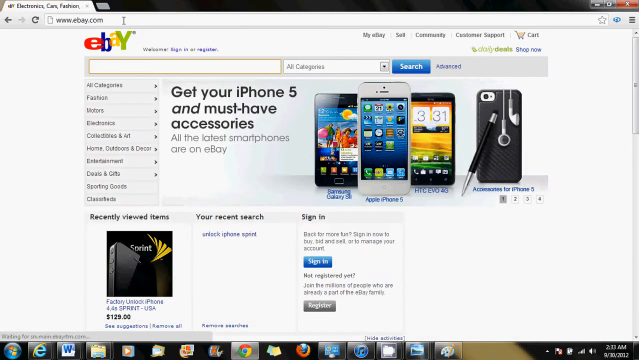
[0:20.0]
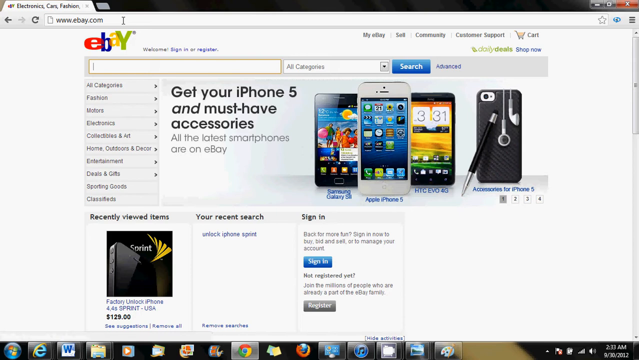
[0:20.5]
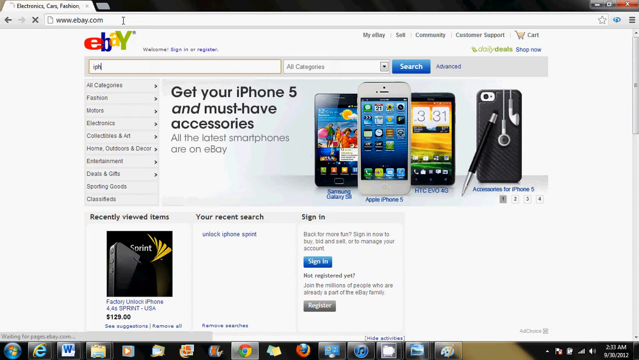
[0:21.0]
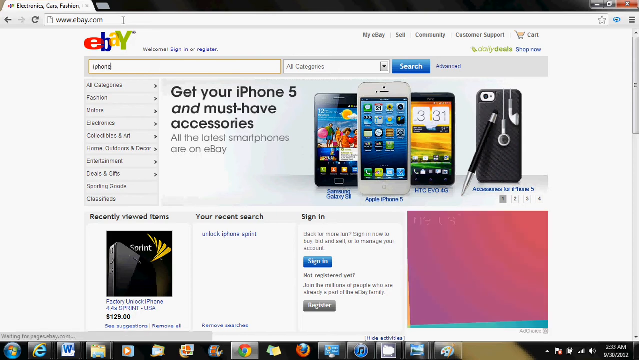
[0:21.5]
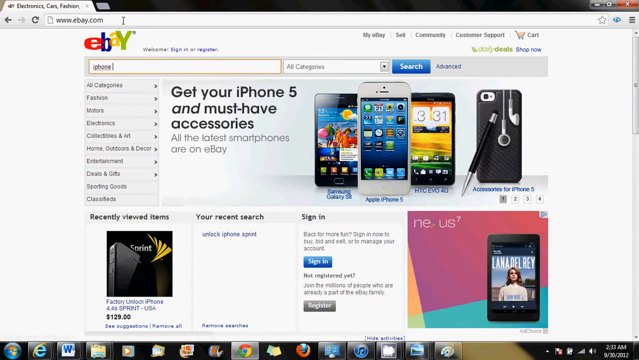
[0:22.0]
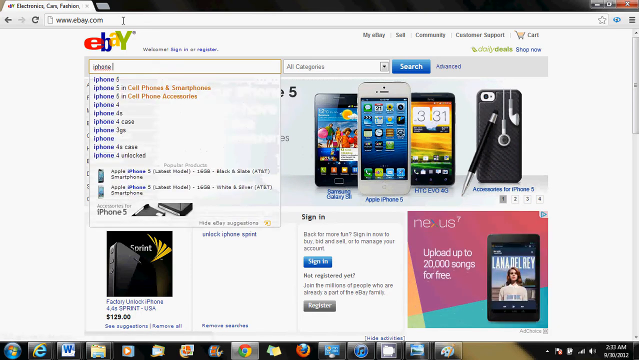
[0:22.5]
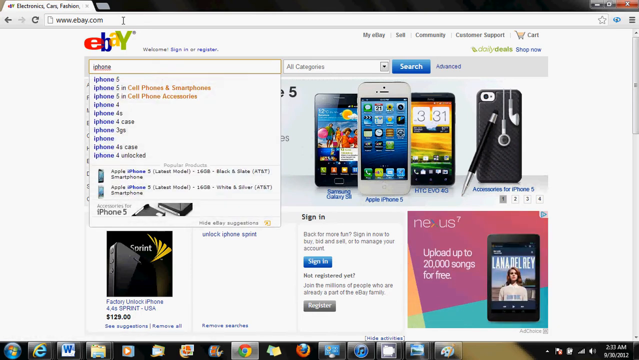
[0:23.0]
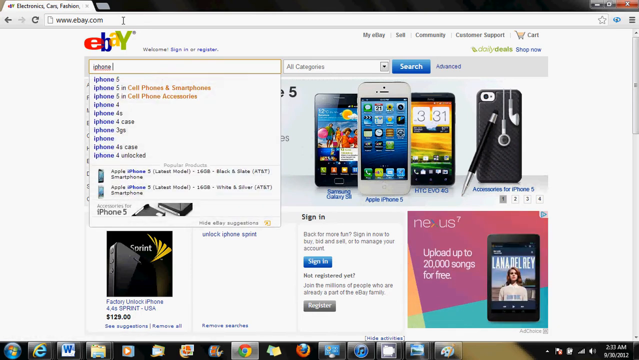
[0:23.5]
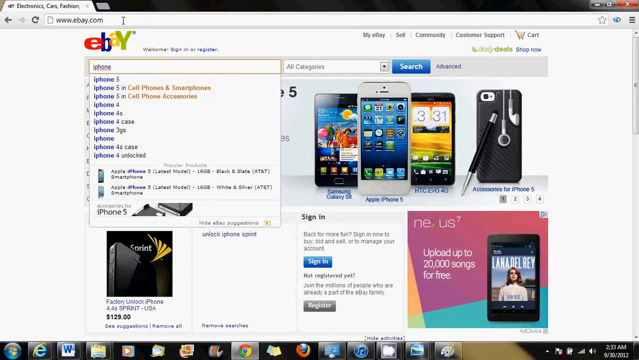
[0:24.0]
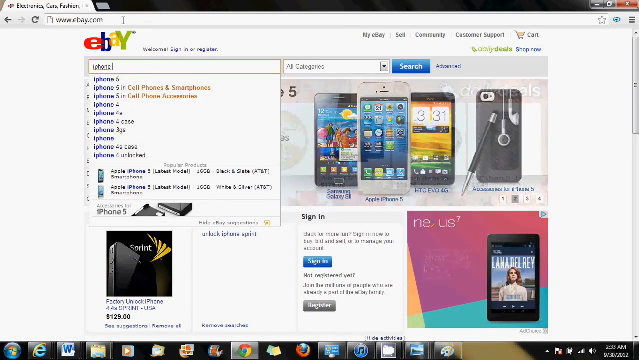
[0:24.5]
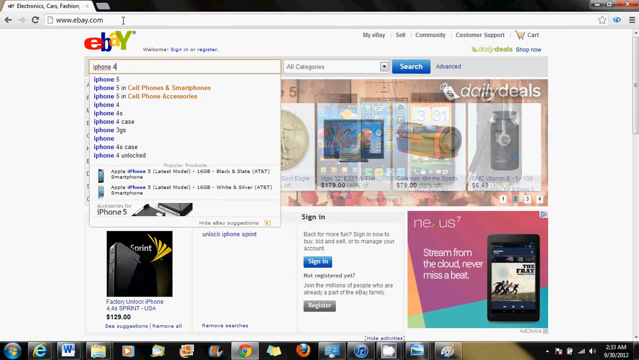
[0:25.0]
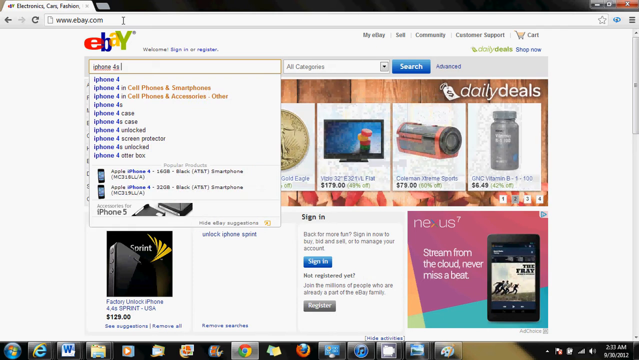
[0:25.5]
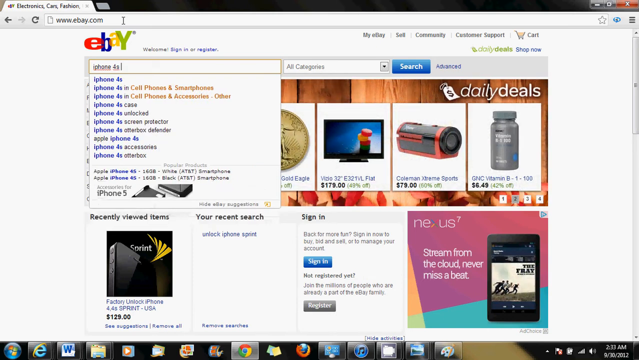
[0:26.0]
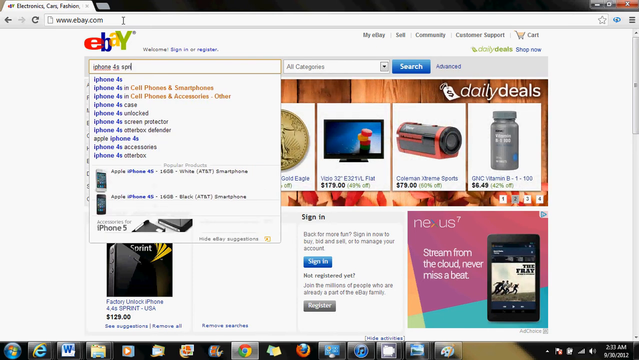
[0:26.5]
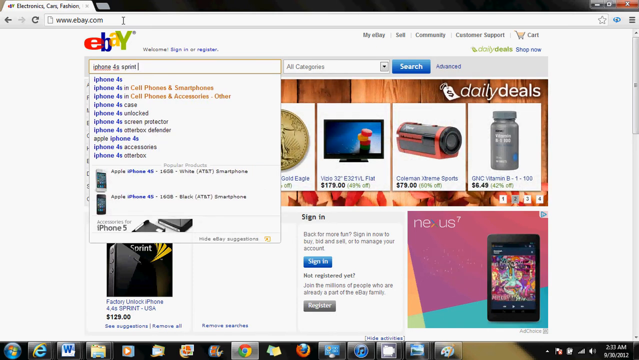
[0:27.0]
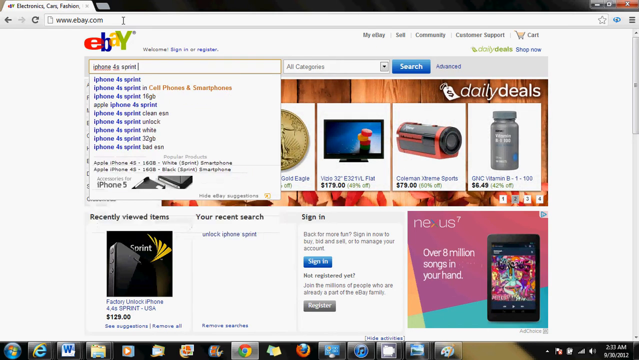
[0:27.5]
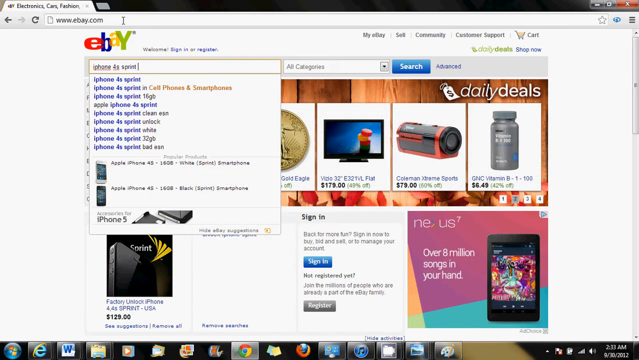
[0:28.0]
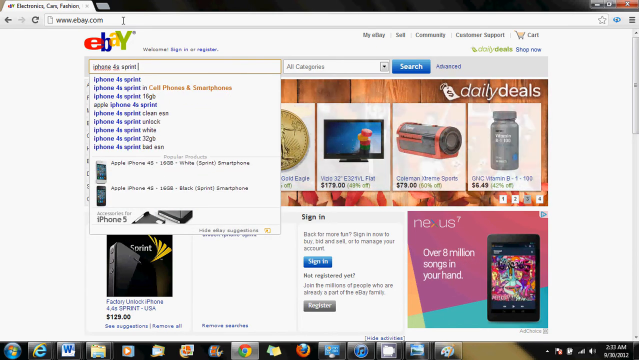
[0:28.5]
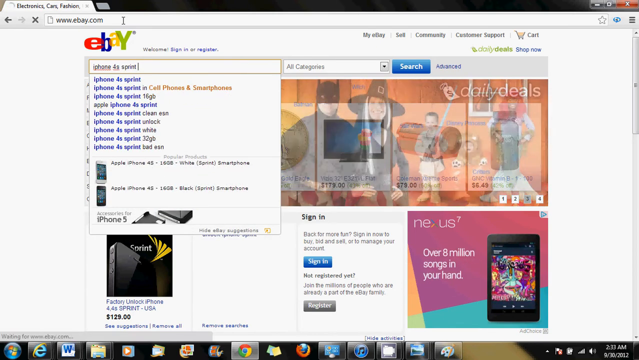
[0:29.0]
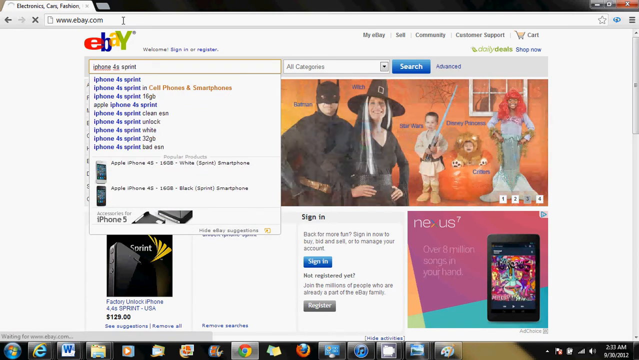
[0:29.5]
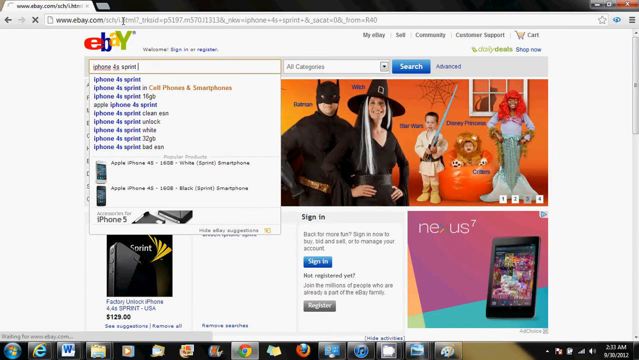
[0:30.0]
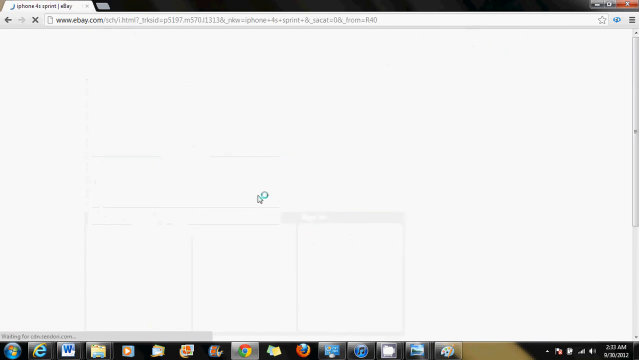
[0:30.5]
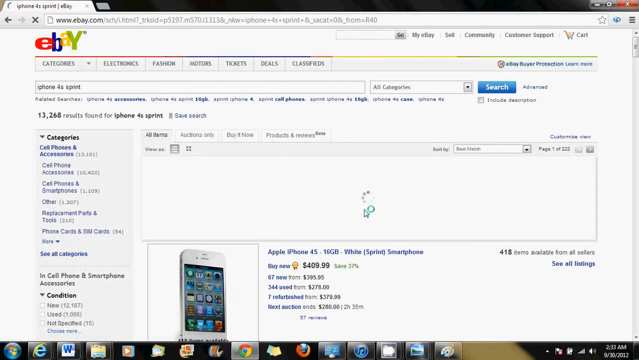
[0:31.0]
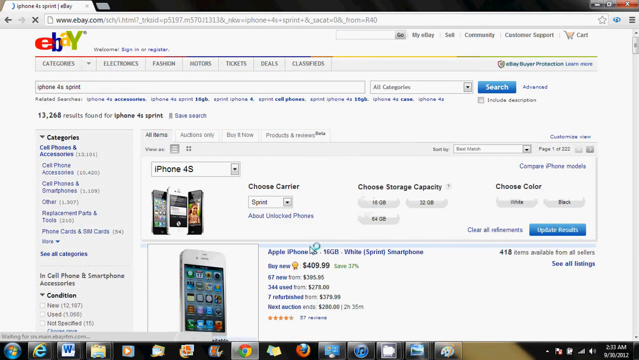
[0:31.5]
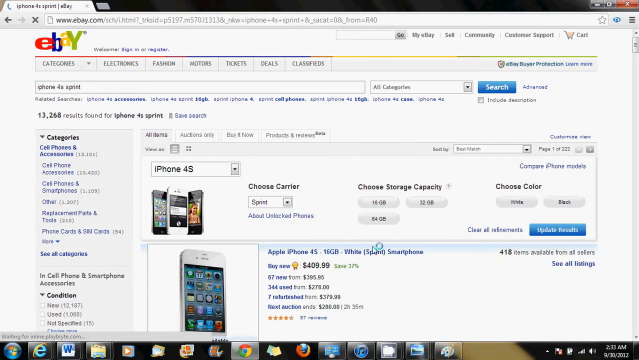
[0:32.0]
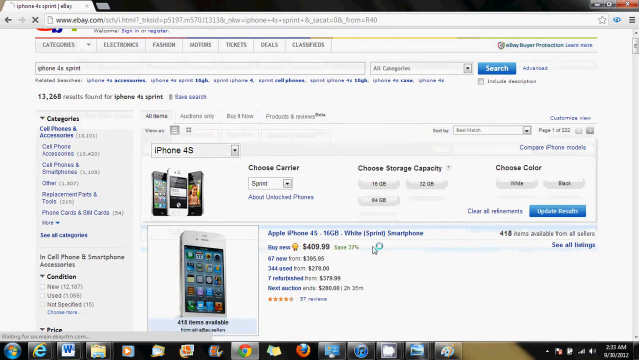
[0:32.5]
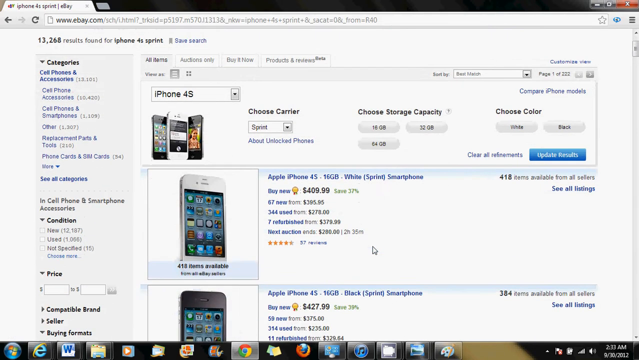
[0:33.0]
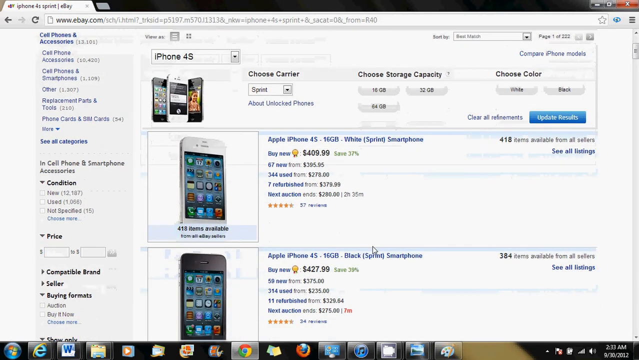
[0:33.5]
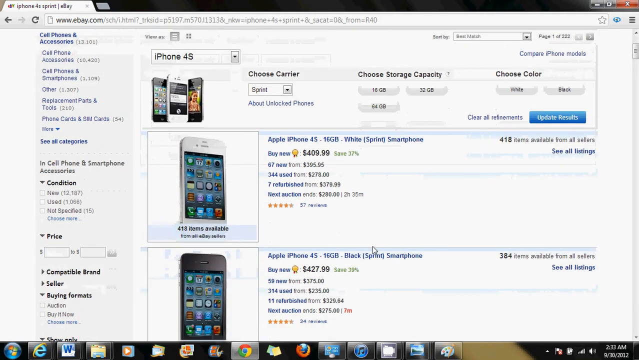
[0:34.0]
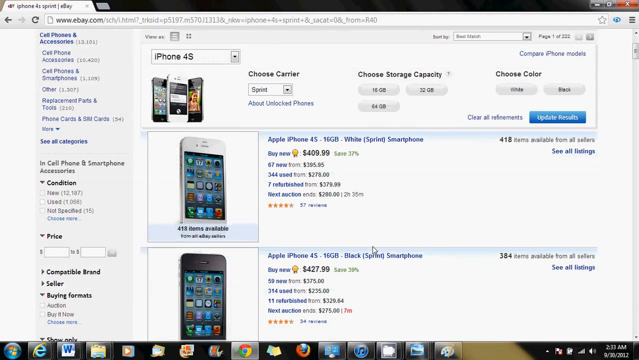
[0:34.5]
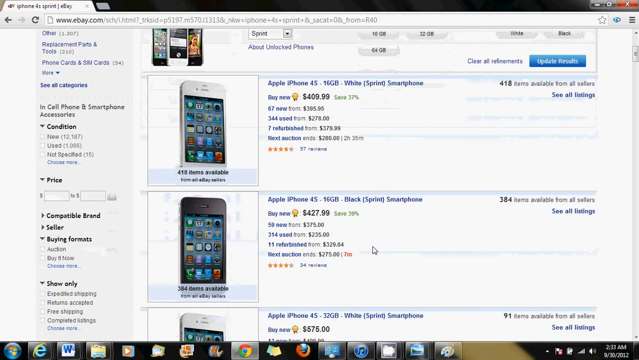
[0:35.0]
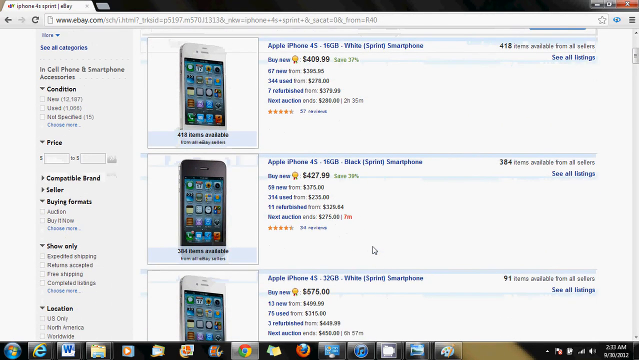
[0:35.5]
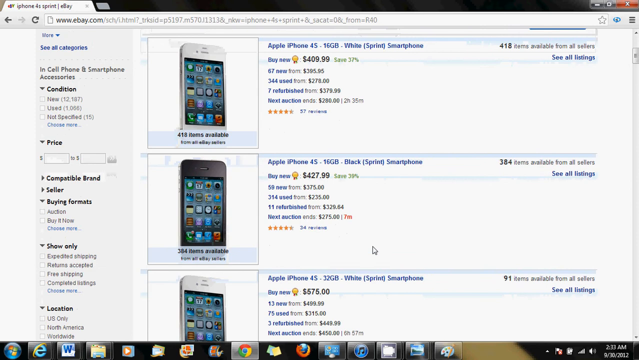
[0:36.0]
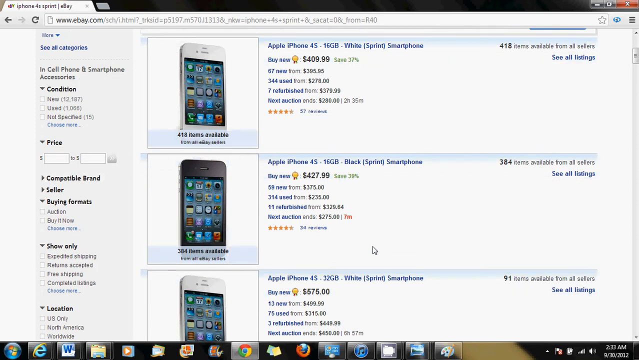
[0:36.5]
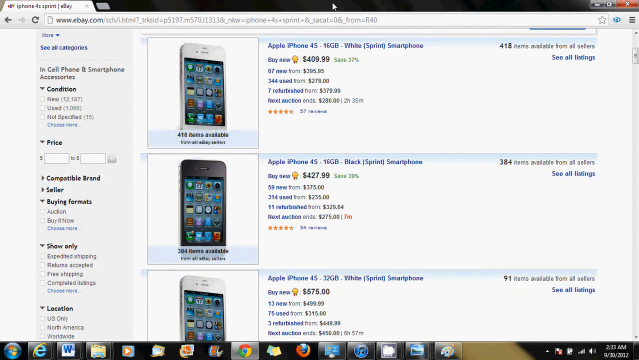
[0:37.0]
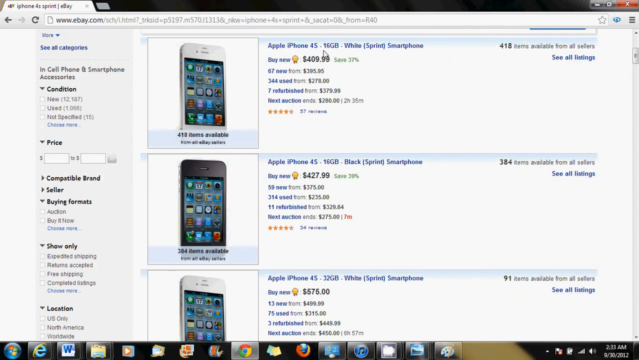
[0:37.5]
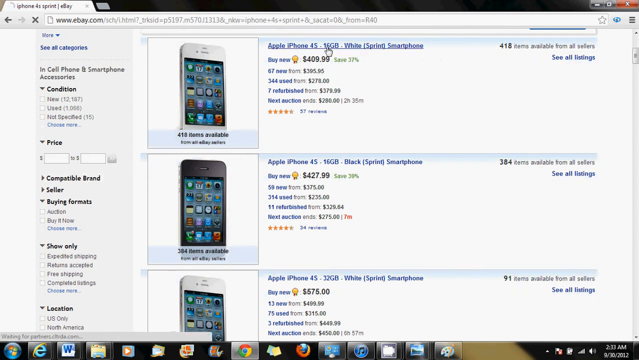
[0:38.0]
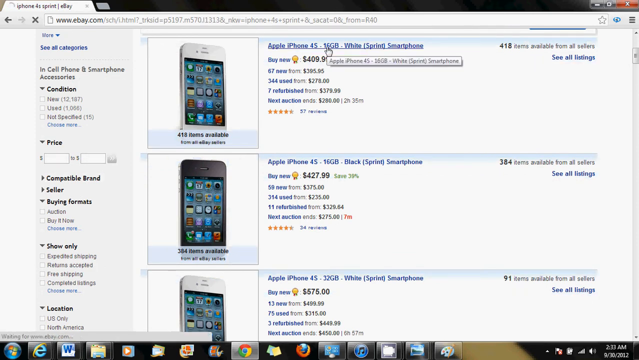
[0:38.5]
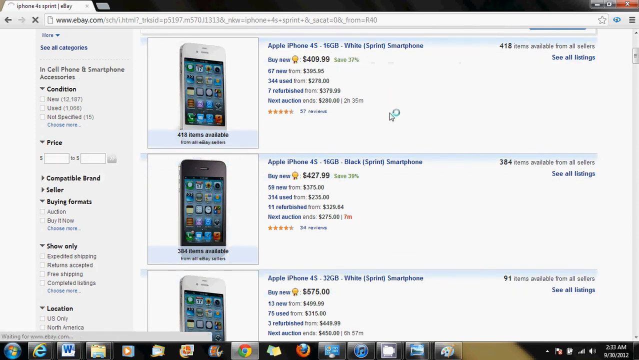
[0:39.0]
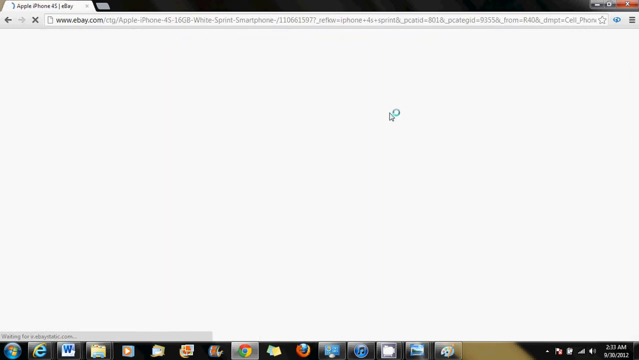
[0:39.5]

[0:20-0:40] On eBay, the person types "iPhone 4S Sprint" into the search bar, and quite a few listings appear, each with a large picture of the iPhone 4S that looks like a stock image. The person scrolls through the page. The site is an old version of eBay with the old logo, whose letters are uneven: the A and Y are placed a bit higher than the E and B. The eBay homepage has a large iPhone 5 advertisement showing several iPhones. The first listing is "iPhone 4S 16GB white Sprint smartphone," and the person clicks on it before the video cuts.